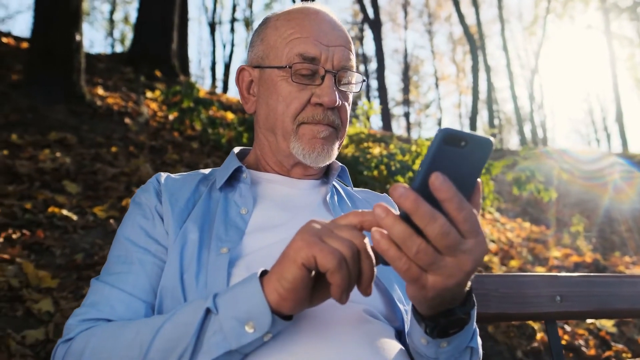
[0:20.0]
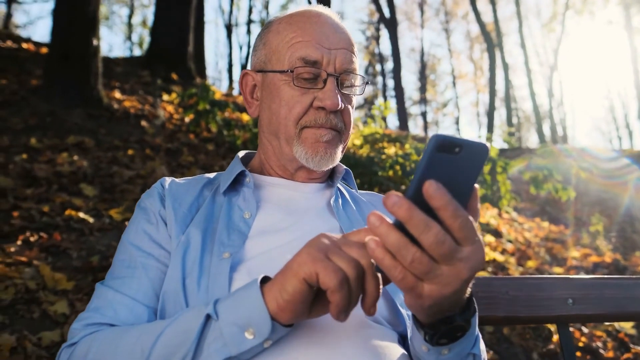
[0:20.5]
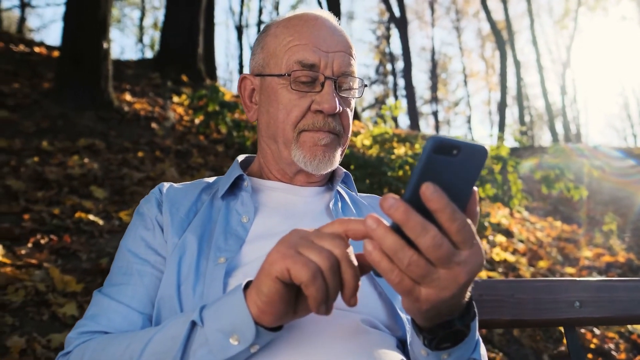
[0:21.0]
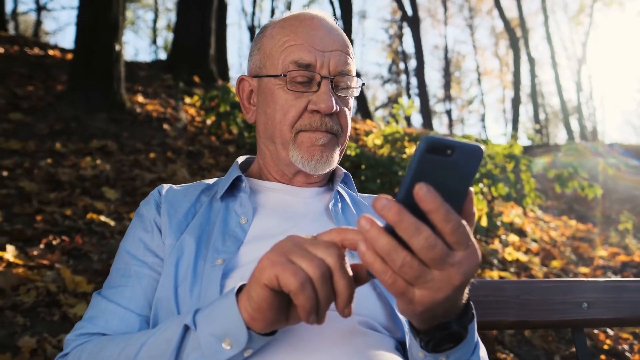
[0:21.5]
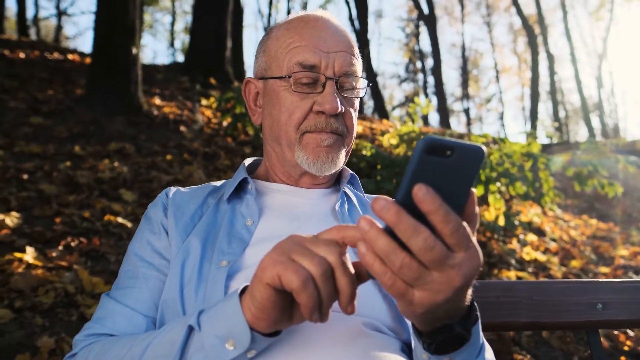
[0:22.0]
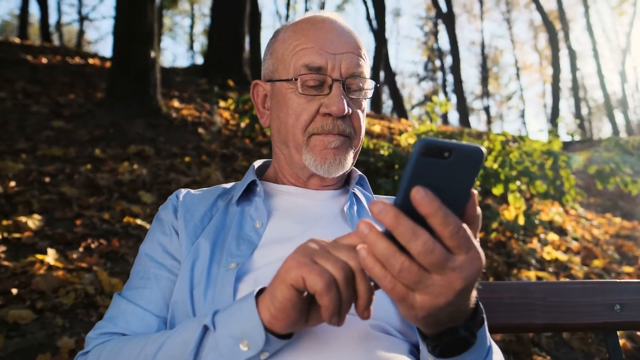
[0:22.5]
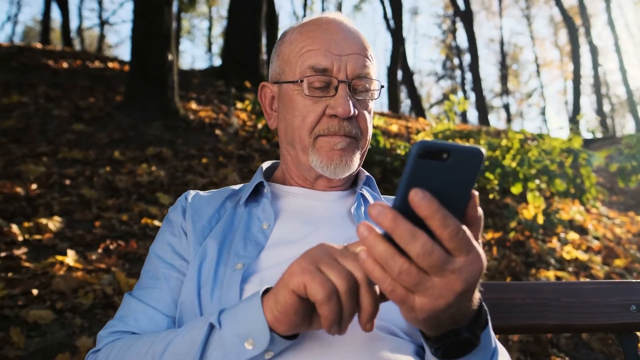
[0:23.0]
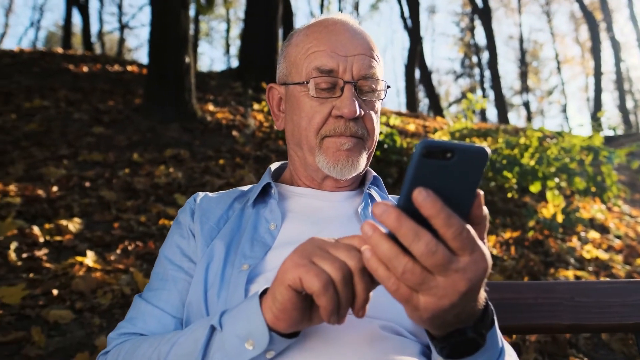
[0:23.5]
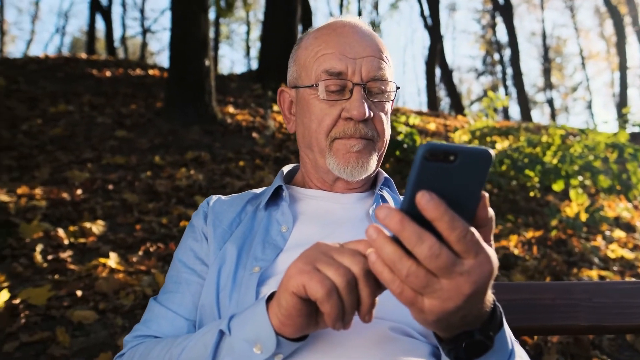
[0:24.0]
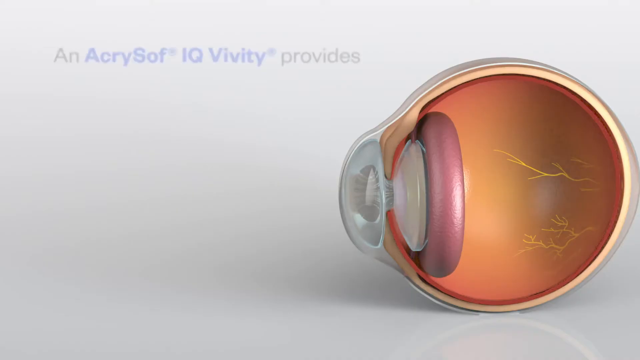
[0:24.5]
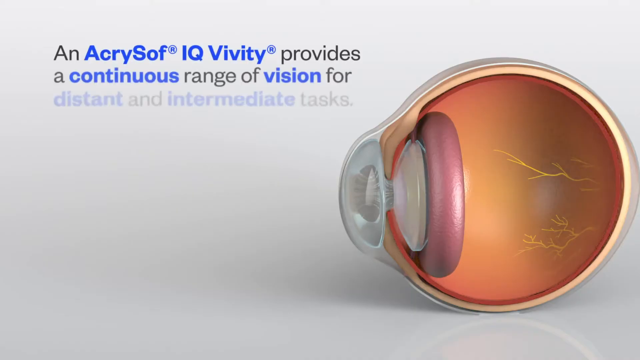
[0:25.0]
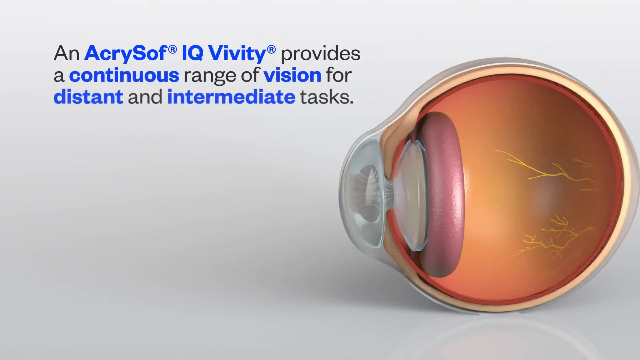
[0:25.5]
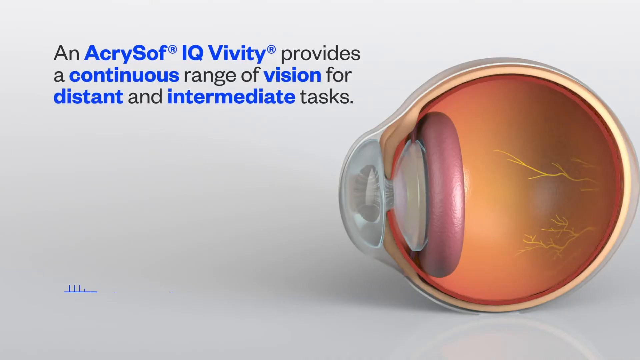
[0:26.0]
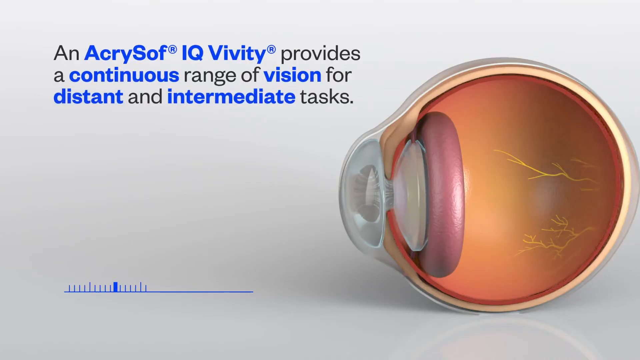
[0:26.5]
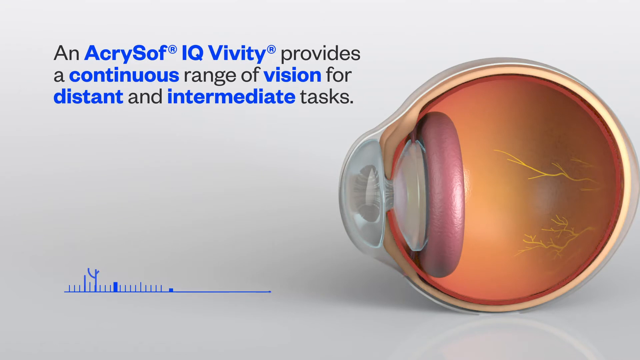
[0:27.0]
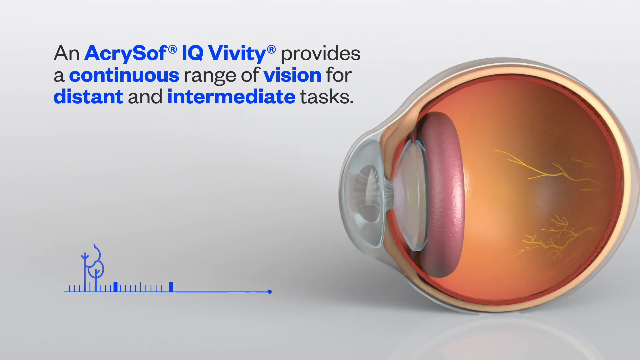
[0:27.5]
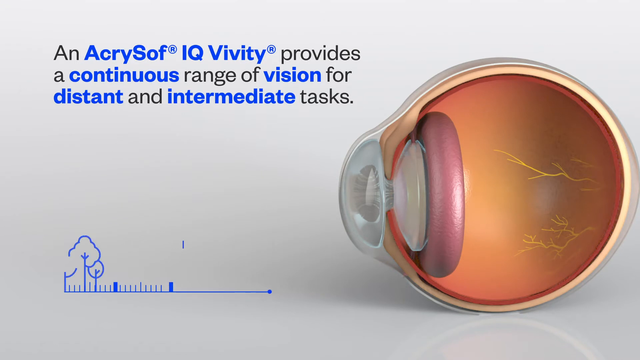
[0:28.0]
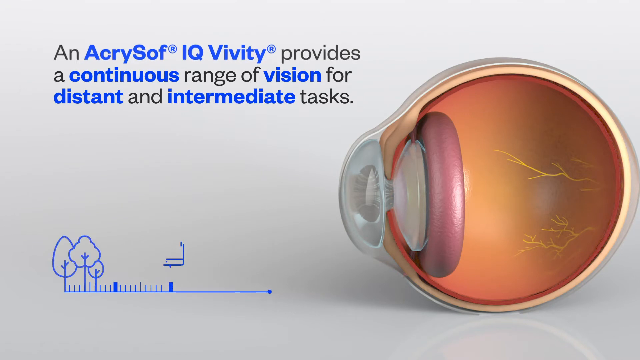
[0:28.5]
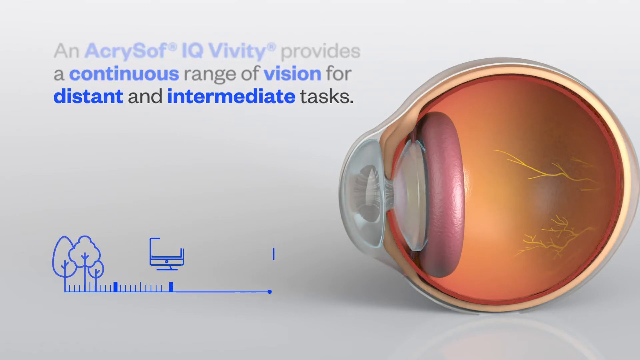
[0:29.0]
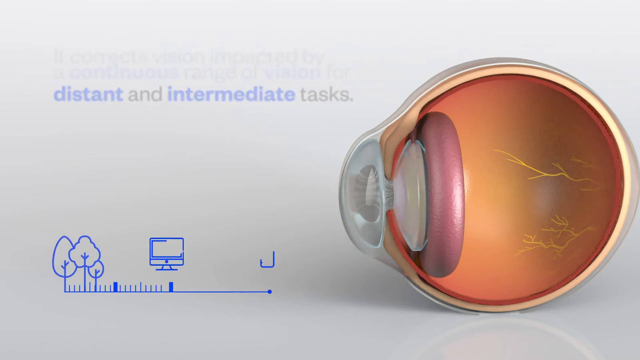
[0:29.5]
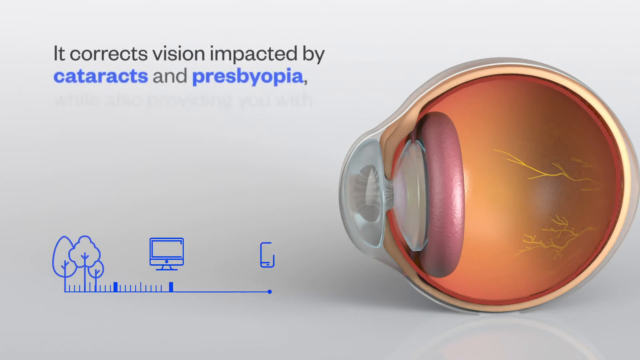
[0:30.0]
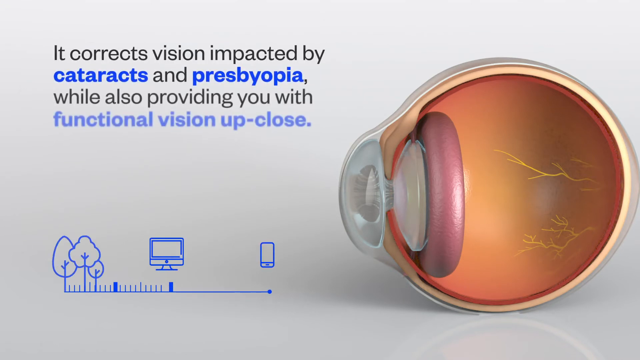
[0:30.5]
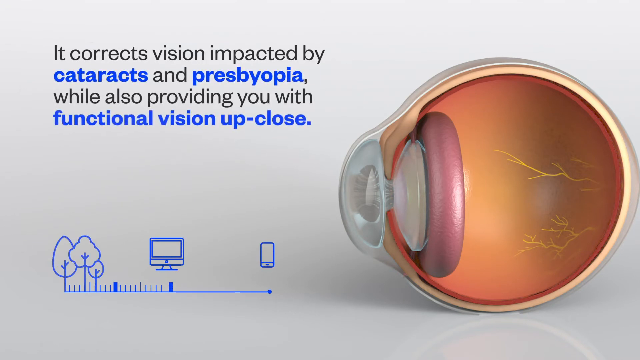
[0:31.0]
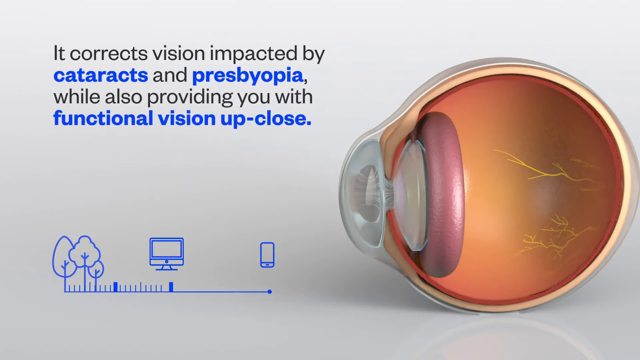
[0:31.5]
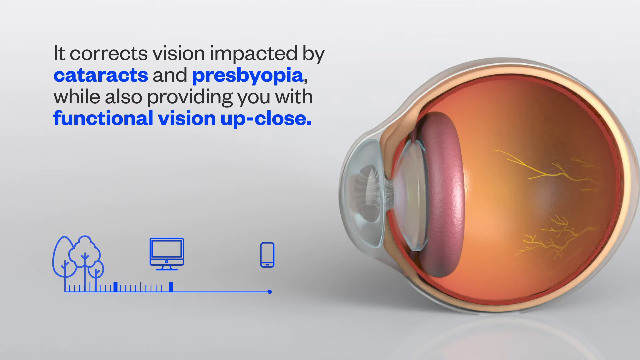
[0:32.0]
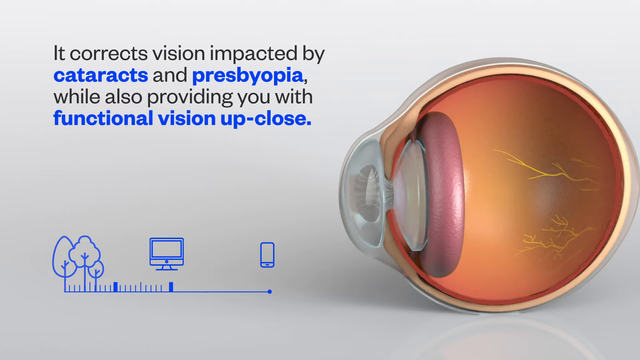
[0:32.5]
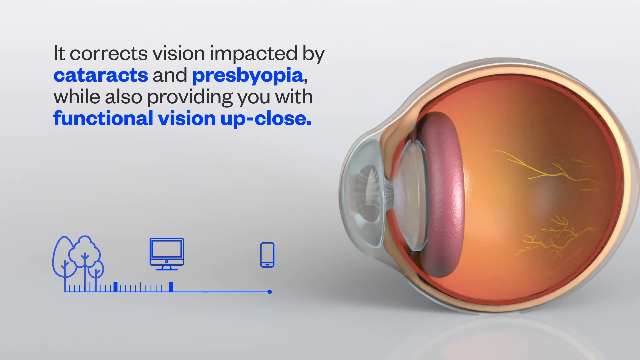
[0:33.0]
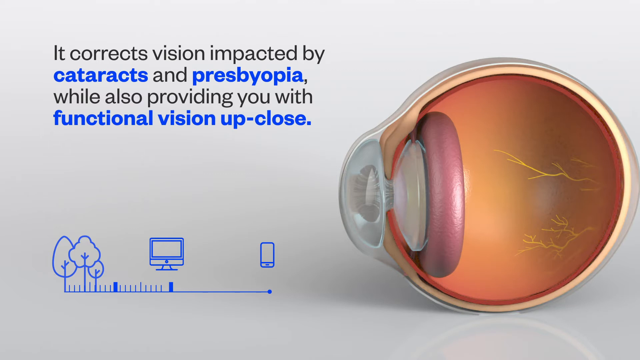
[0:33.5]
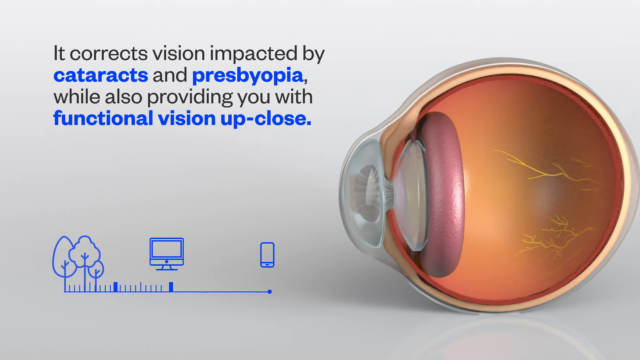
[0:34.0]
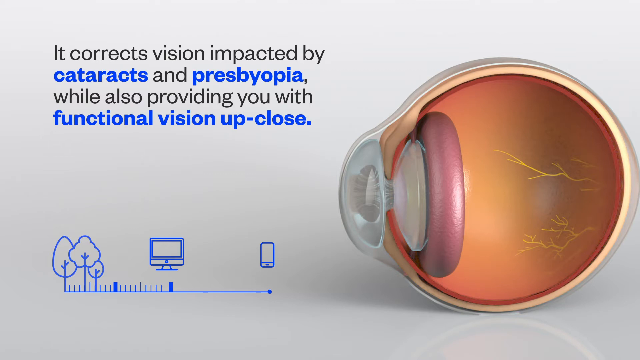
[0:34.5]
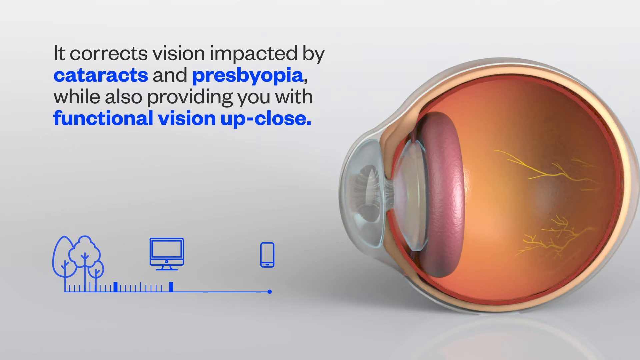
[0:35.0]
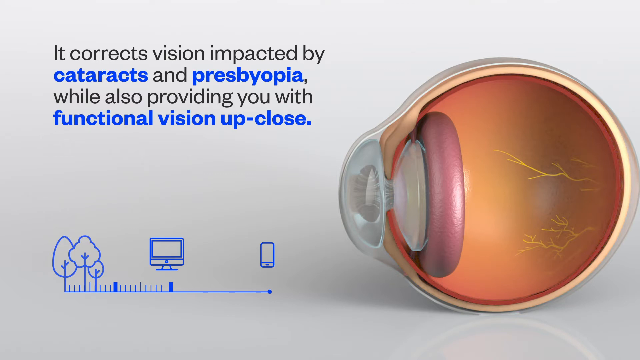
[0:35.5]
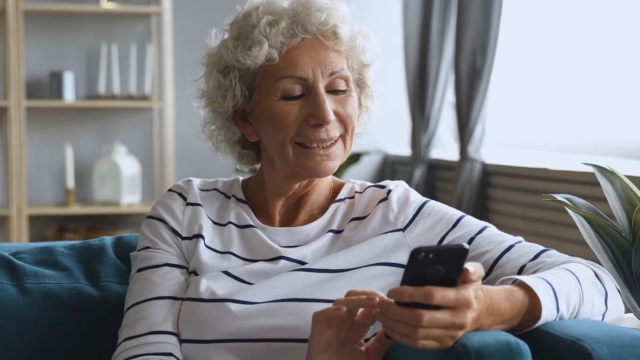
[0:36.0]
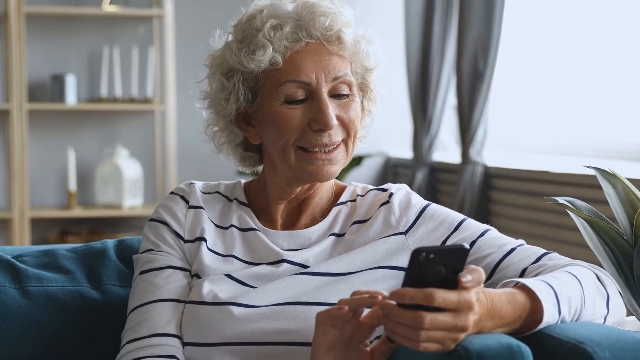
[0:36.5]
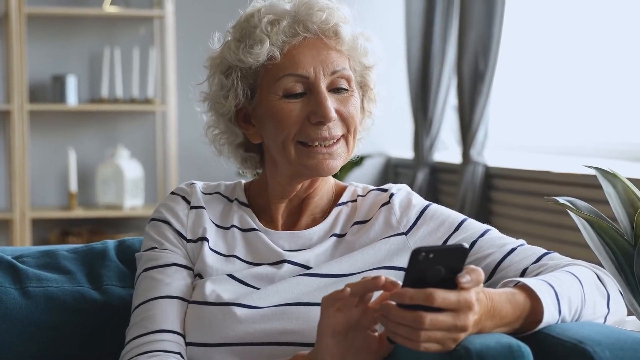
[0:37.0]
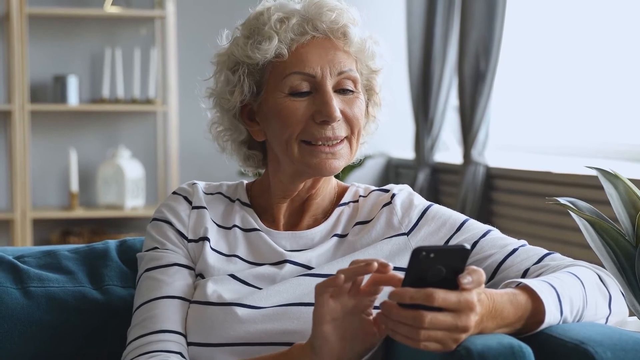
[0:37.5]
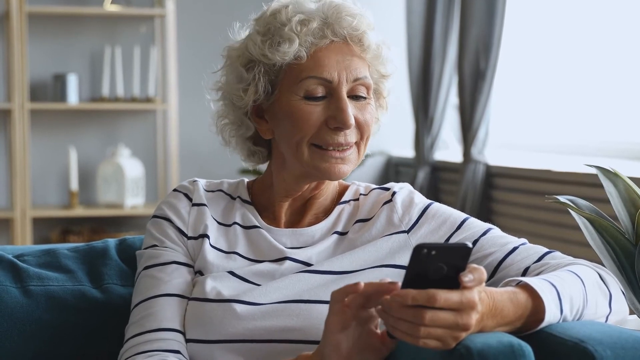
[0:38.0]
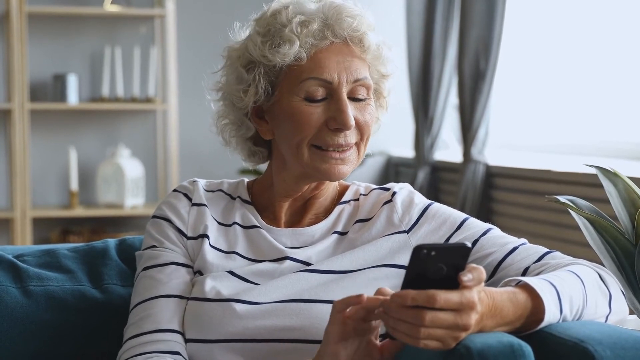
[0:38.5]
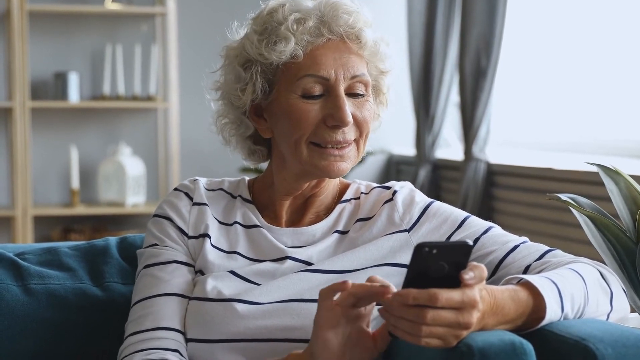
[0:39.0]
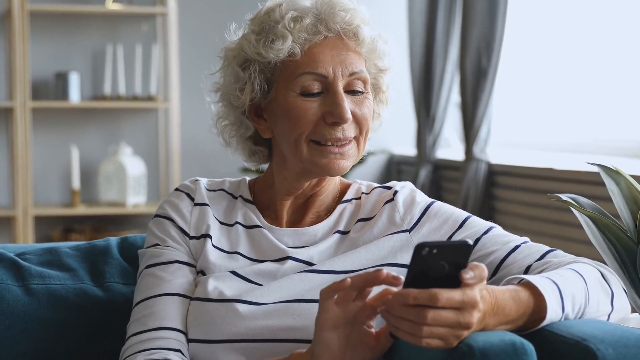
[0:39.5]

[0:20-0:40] The man texts on his phone with his right finger as the camera pans around him. The next shot shows the same eyeball as before, with the text "an AcrySof IQ Vivity provides a continuous range of vision for distant and intermediate tasks". The writing is mostly black, but the words "AcrySof IQ Vivity", "continuous", "vision", "distant" and "intermediate" are bold and blue. This fades away to a new set of text: "it corrects vision impacted by cataracts and presbyopia while also providing you with functional vision up close", with "cataracts", "presbyopia" and "functional vision up close" in bold blue. The next shot shows an older woman with dark white hair texting on her phone, wearing a white long sleeve with horizontal black lines. She holds the phone in her left hand and types with her right index finger. There seems to be a shelf behind her, and she is sitting in what seems to be a home setting.